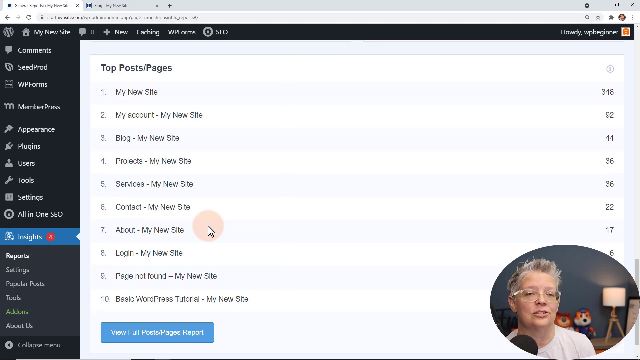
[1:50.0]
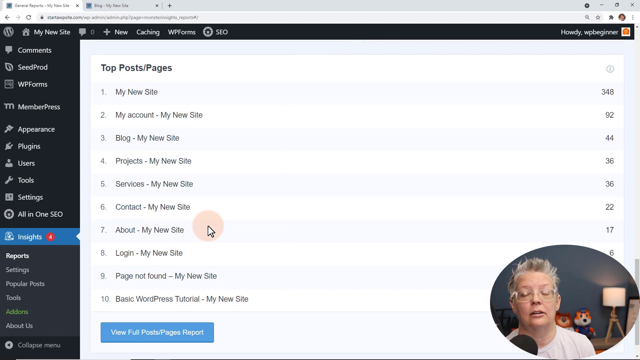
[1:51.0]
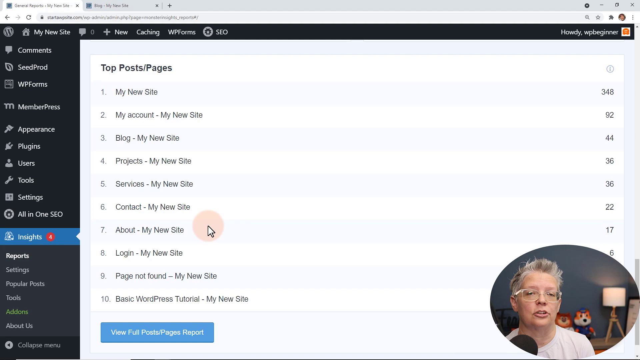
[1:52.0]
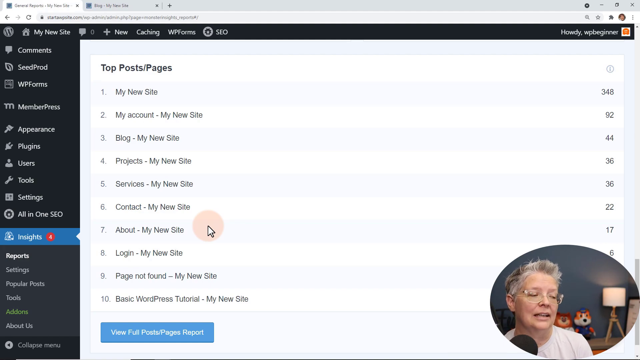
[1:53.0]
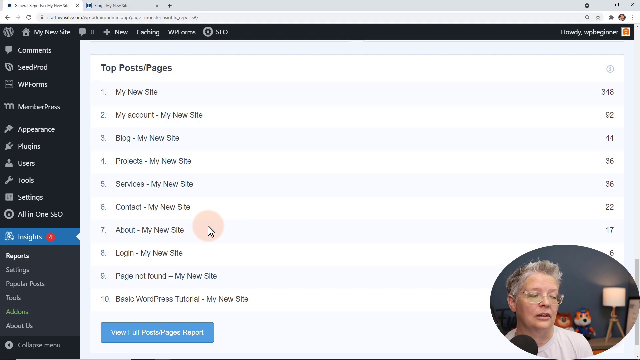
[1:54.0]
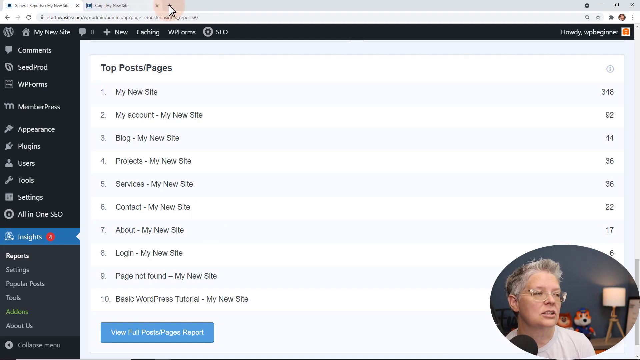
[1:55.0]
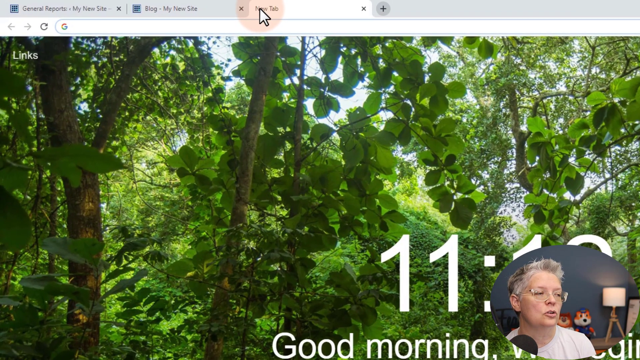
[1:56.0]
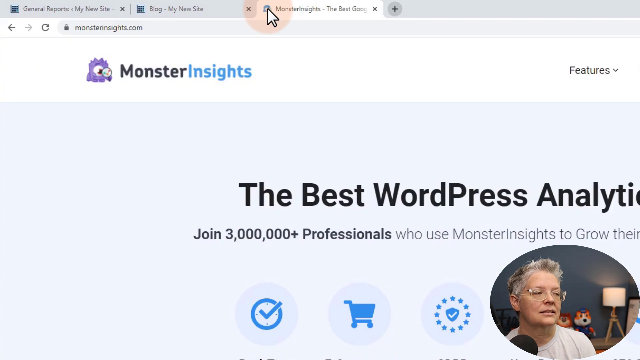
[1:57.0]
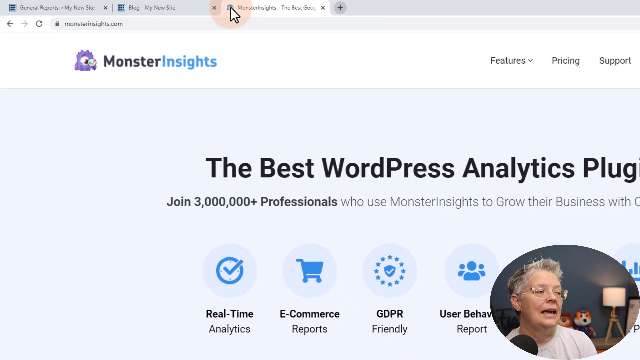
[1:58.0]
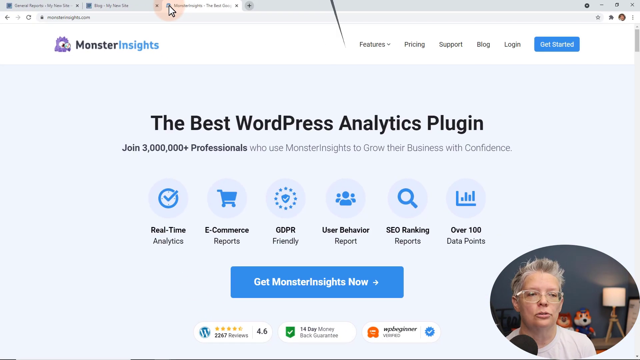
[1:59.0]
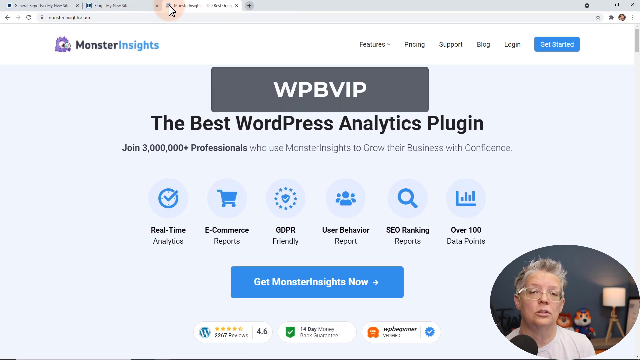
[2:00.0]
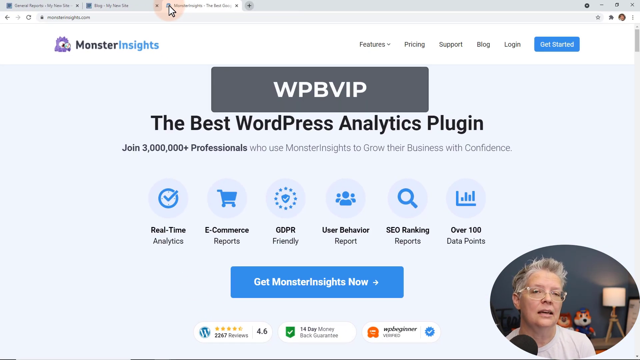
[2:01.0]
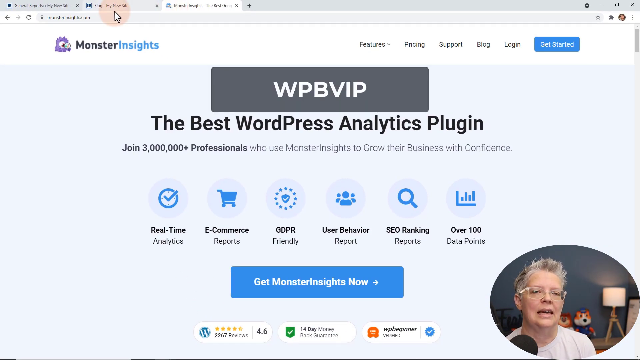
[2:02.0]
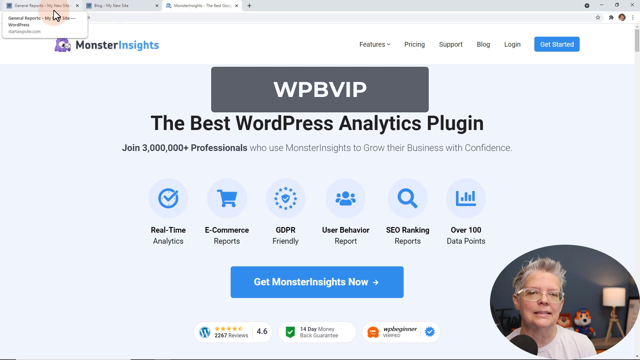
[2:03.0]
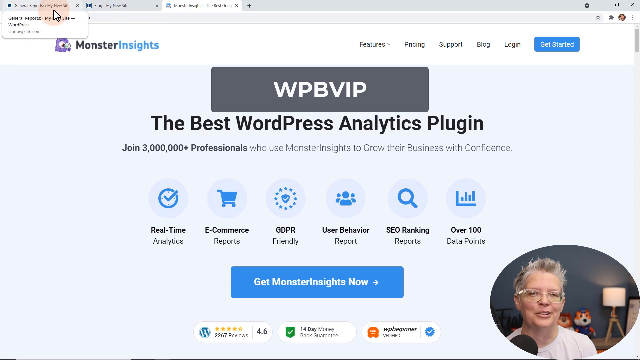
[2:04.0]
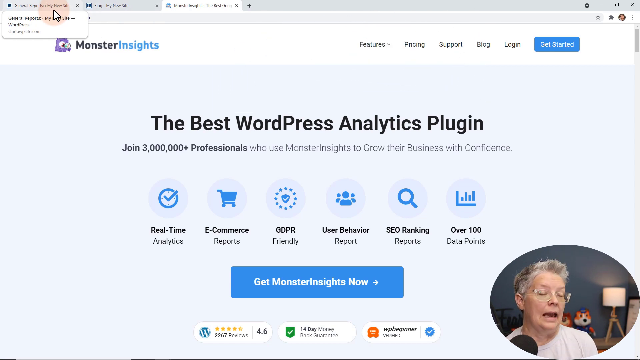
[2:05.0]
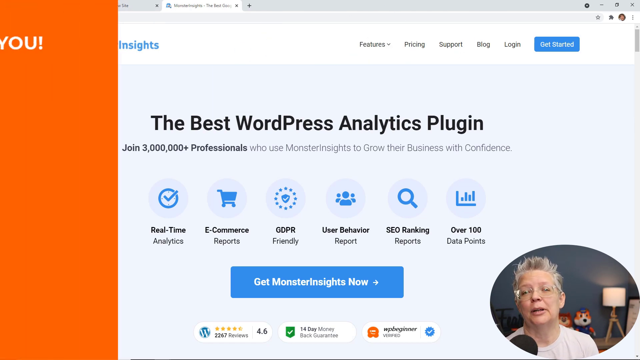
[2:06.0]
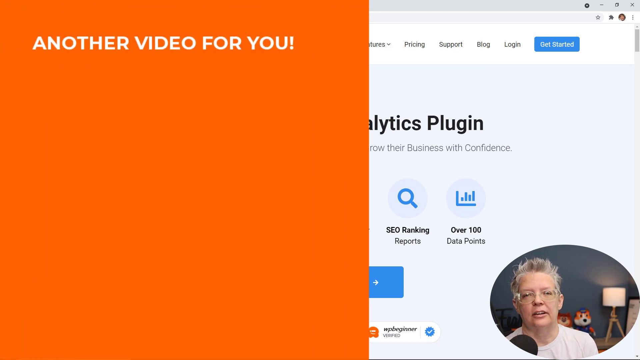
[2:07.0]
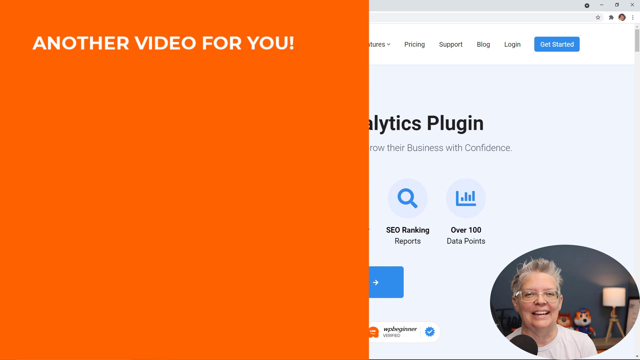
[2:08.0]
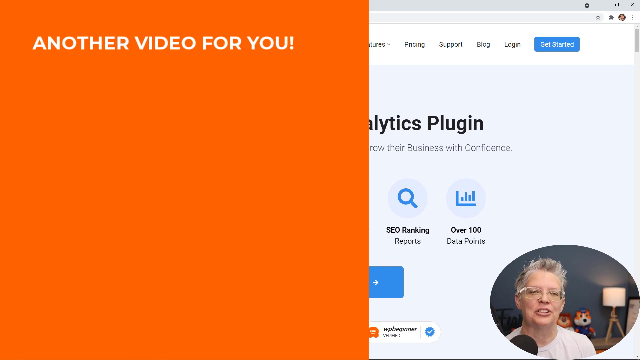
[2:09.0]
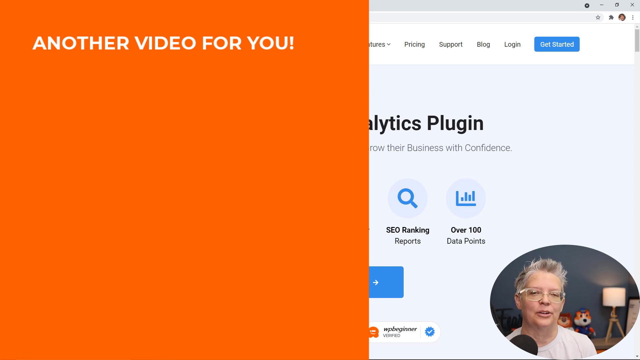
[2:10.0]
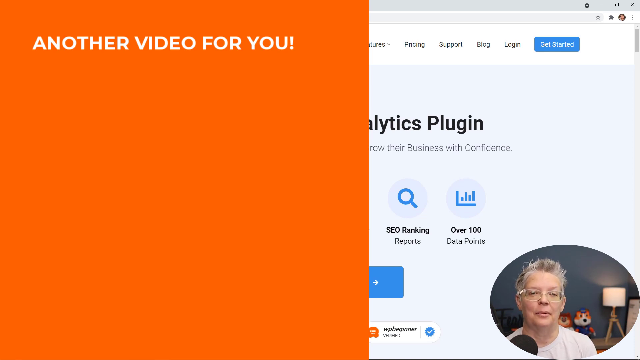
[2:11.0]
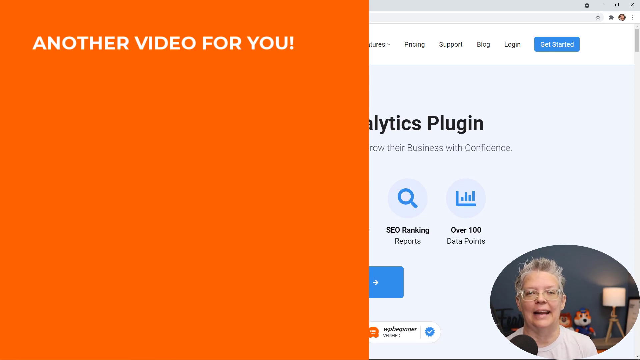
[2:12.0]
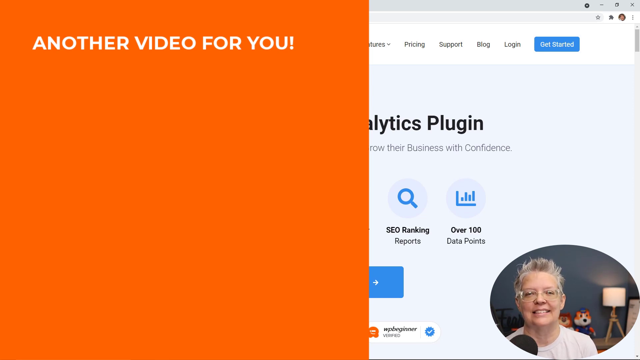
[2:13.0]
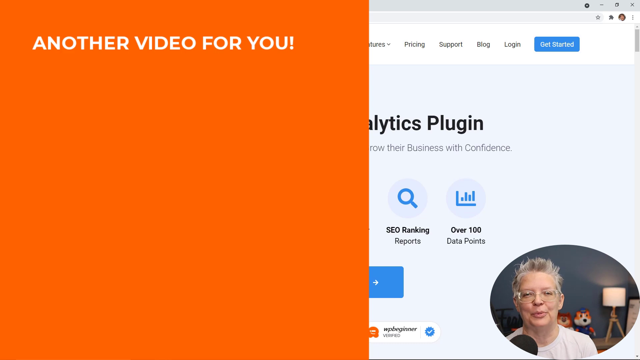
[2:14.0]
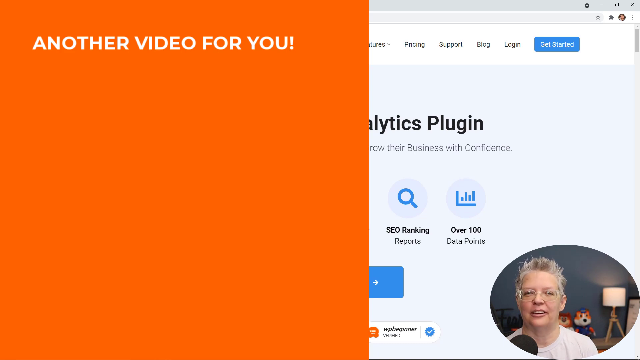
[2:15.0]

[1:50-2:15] The woman, with gray hair and glasses, white skin, kind of Caucasian, aged between 40 and 45, still appears in the bubble, with a lamp and a dog behind her and a black-blue wall at the bottom of the screen. She is on some sort of insights page, then opens a new tab on monsterinsights.com showing information about the best WordPress analytical plugin, including "MPB," "VIP pop-up" and "get Monster Insights." She then hovers over another tab in the top left. She appears to be doing some sort of outro, as an orange pop-up appears with white text saying "another video for you." The Monster Insights page also shows information about an analytical plugin and many logos and other items.